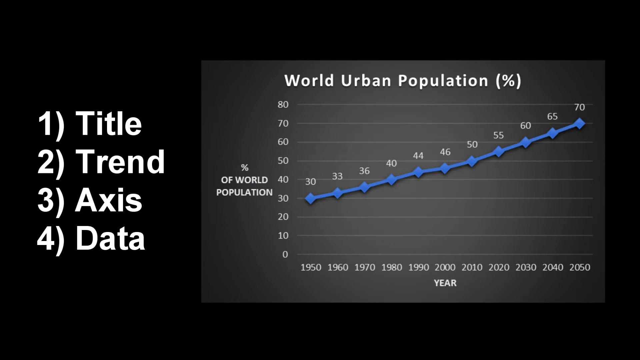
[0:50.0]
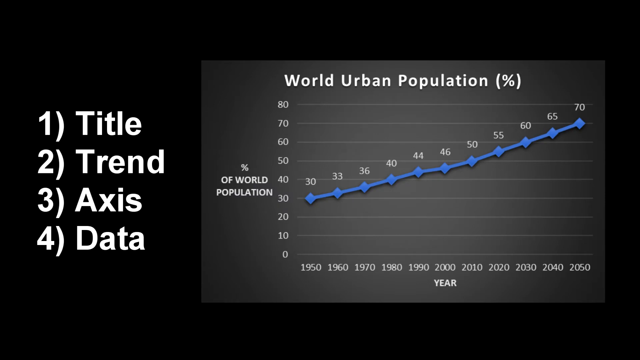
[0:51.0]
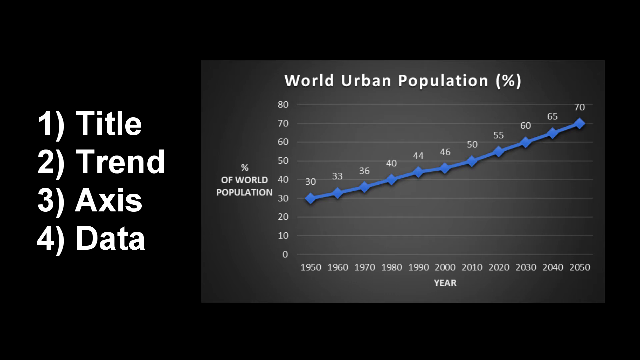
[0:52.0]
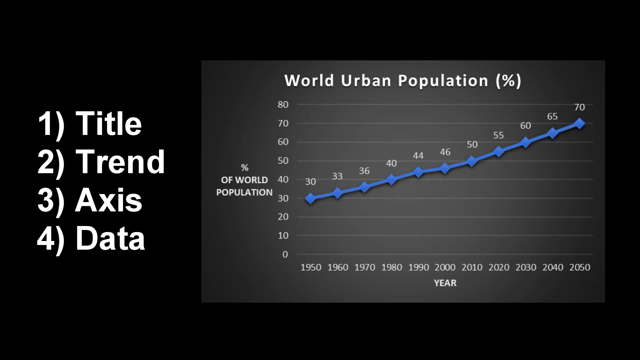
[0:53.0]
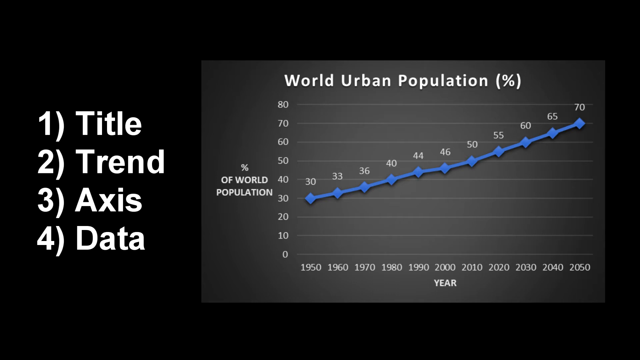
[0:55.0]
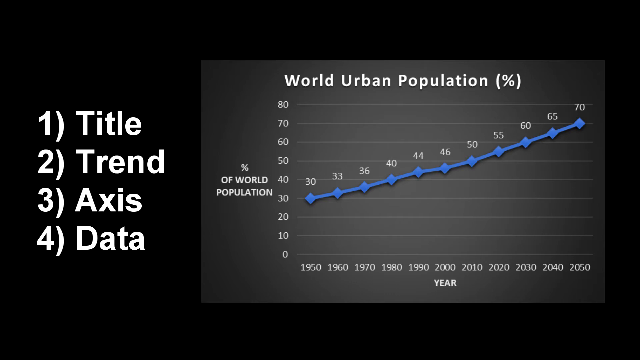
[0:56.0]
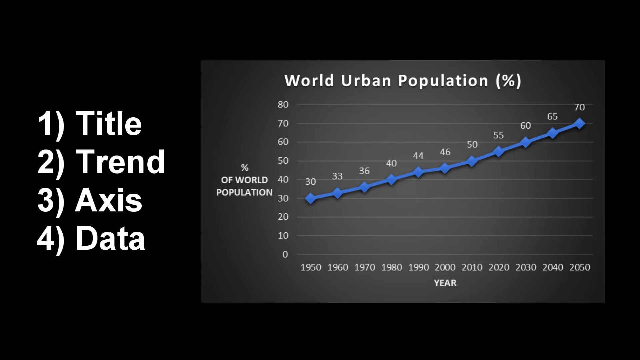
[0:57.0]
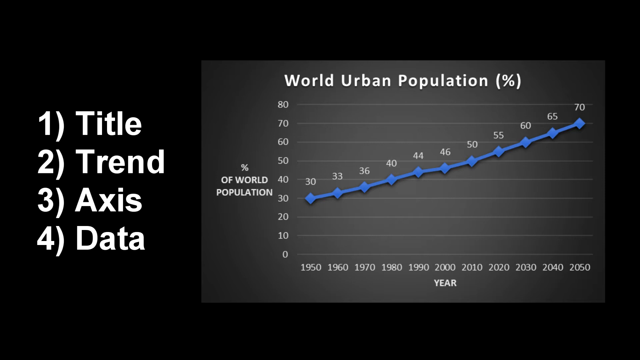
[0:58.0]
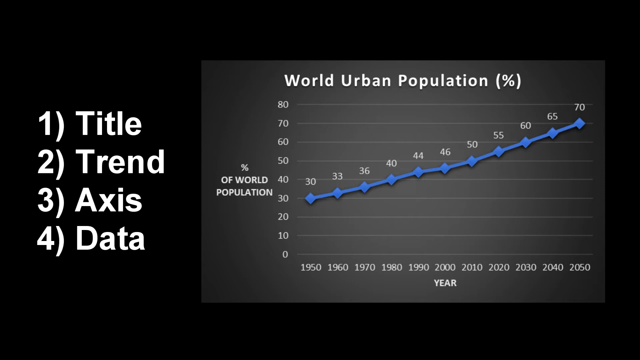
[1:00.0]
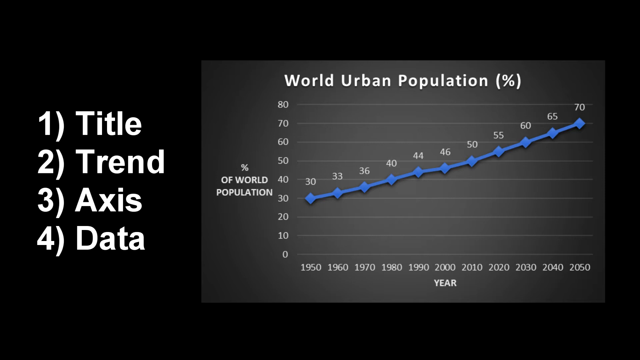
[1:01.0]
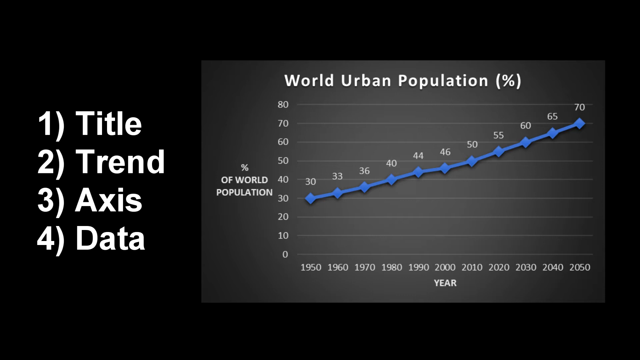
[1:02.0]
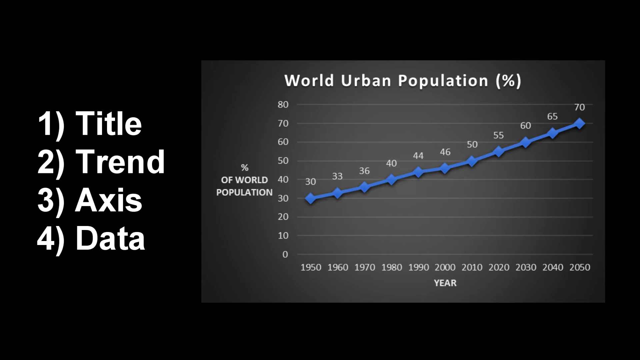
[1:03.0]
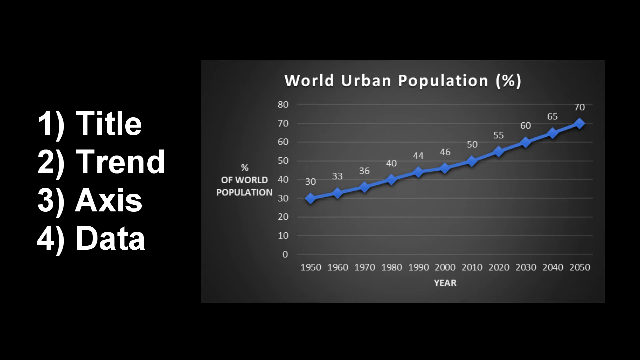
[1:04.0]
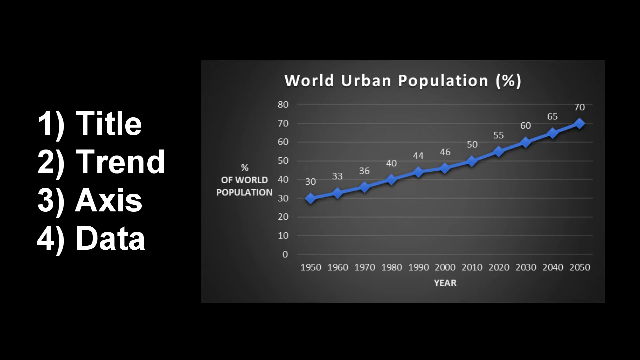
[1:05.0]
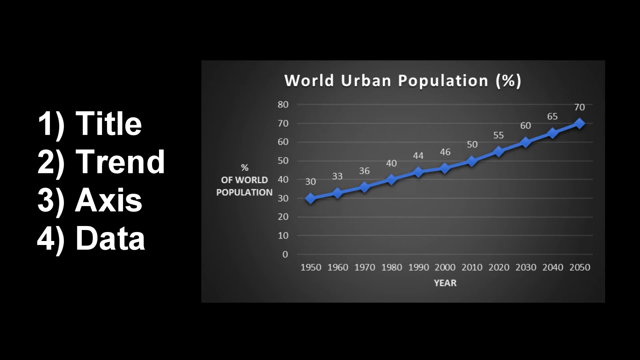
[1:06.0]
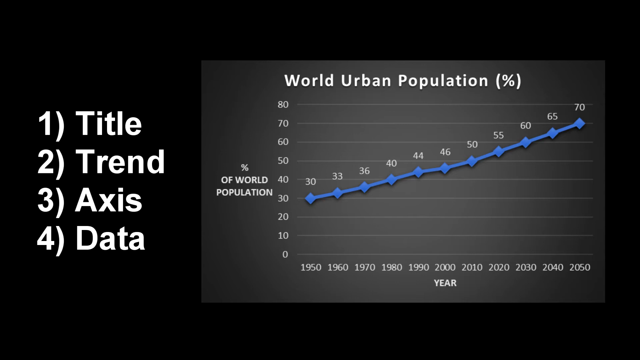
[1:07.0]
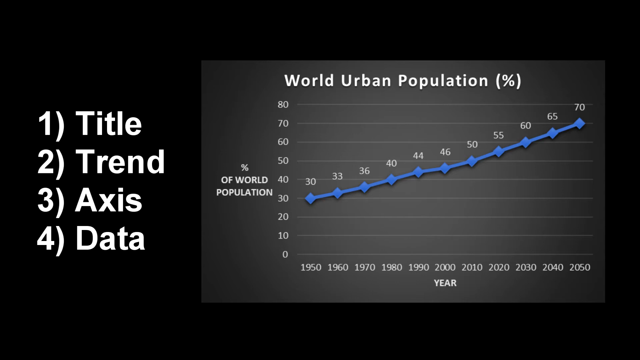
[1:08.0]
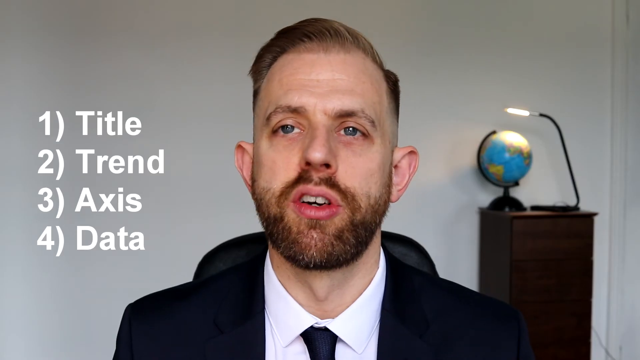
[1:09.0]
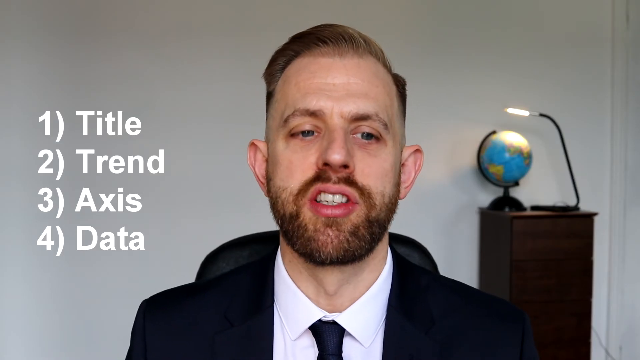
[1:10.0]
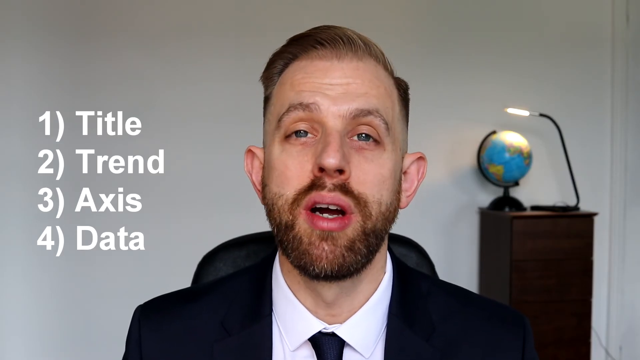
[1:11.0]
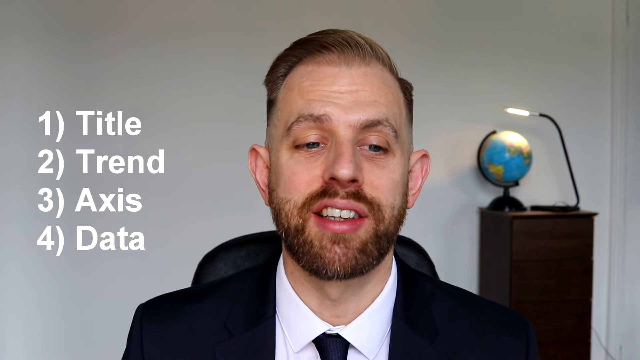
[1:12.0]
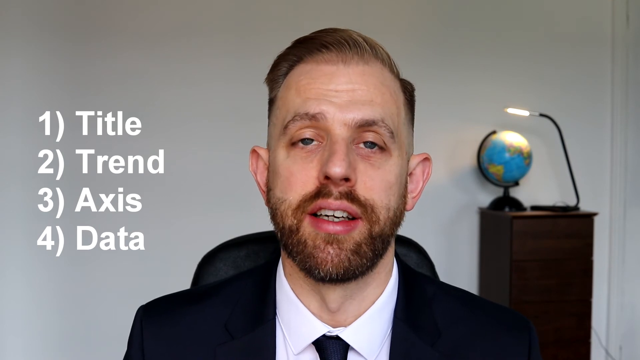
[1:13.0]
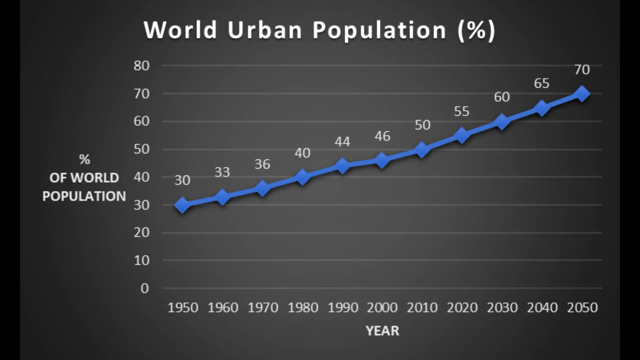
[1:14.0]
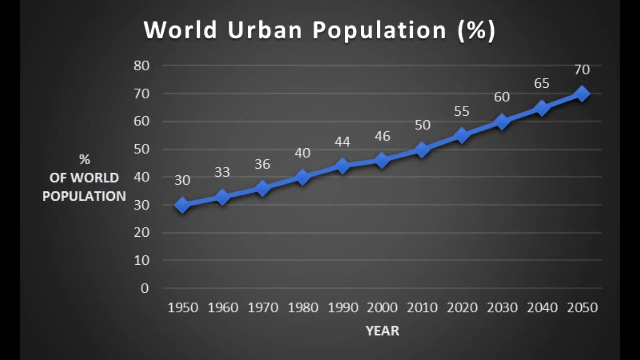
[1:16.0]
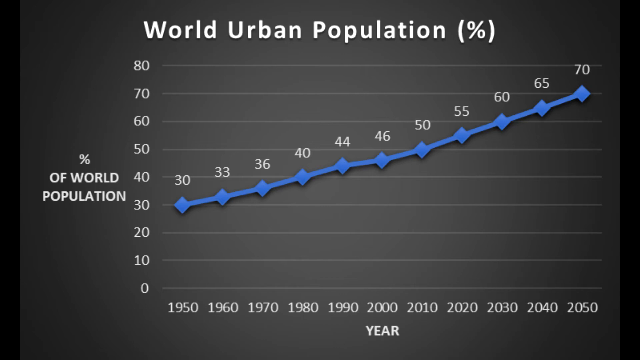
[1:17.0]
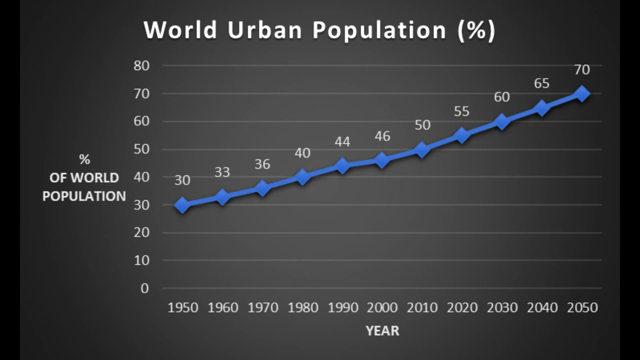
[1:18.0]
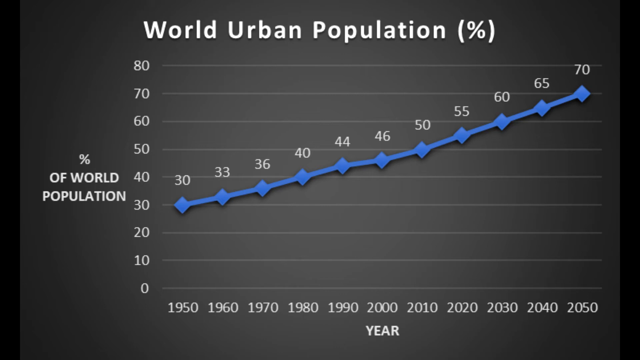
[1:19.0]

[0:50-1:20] The graph with "title," "trend," "access," and "data" is on screen briefly, spanning 1950 to 2050. There is a quick cut to the man explaining, then the video returns to the chart showing world urban population as a percentage of world population, with "title," "trend," "access," and "data" numbered one, two, three and four. The left side shows values from 80 down to zero in increments of 10, and the bottom runs from 1950 to 2050. The line appears to start at around 30% of the world population.